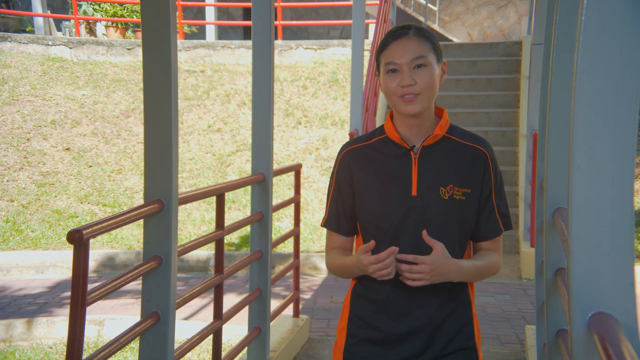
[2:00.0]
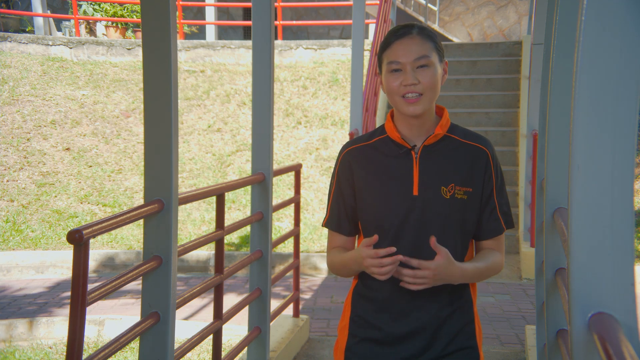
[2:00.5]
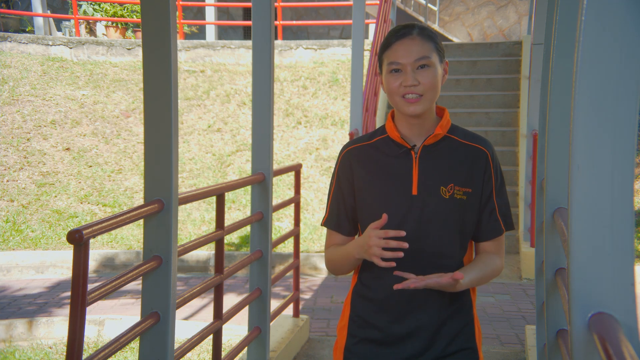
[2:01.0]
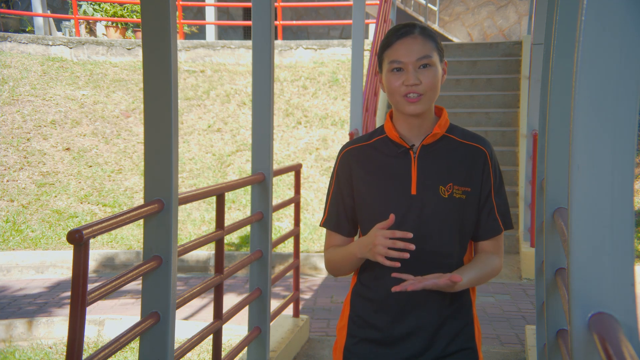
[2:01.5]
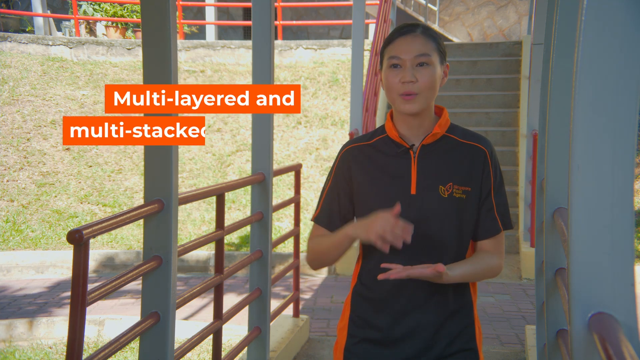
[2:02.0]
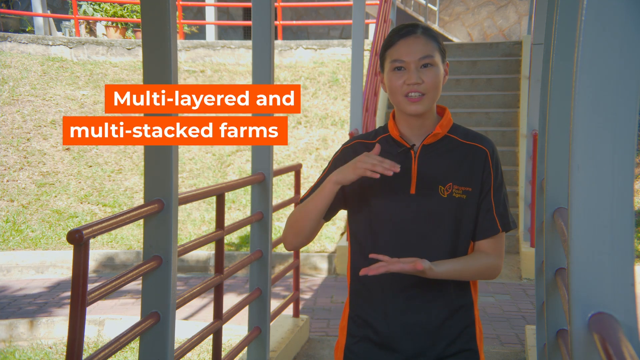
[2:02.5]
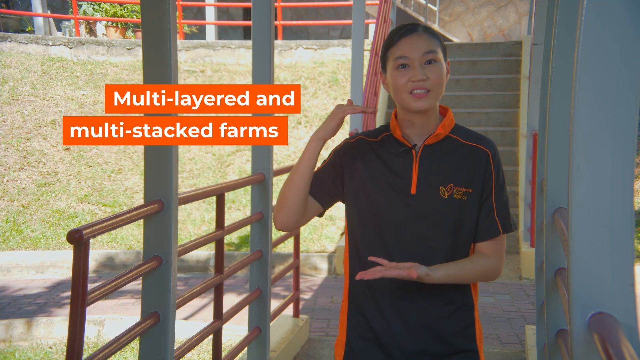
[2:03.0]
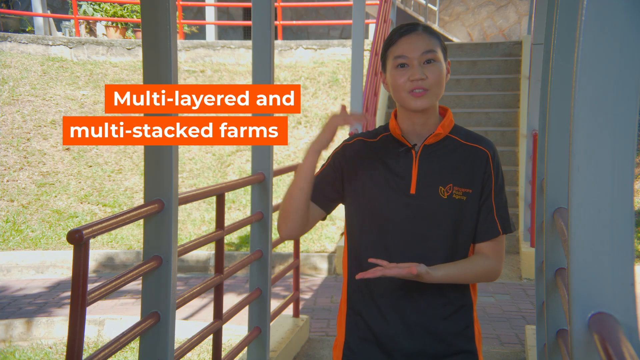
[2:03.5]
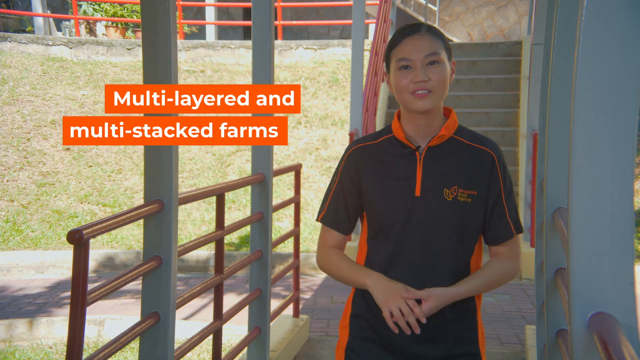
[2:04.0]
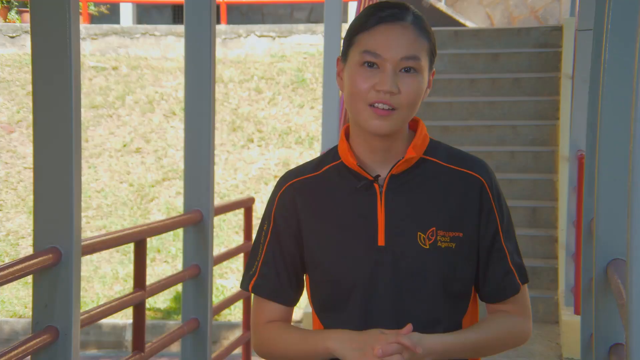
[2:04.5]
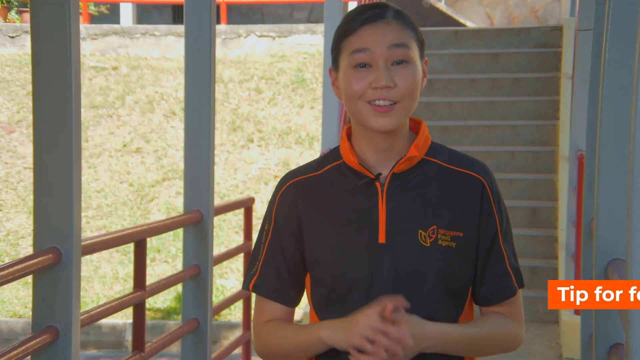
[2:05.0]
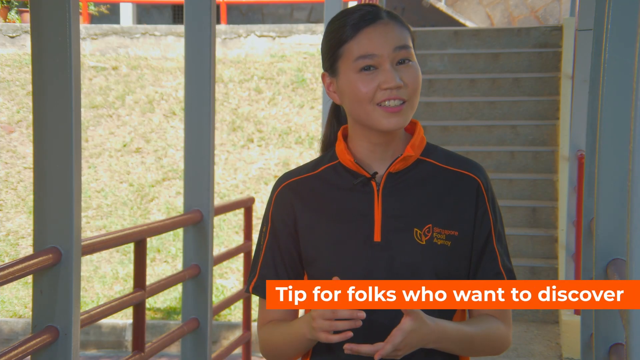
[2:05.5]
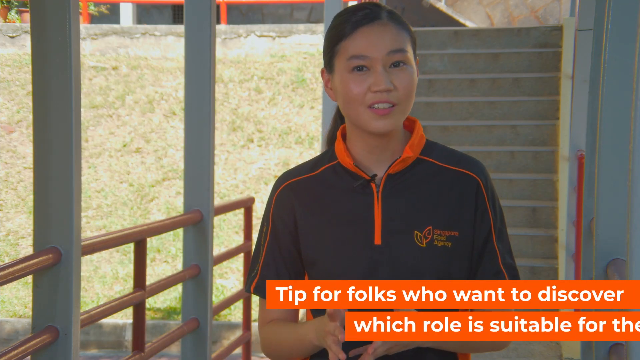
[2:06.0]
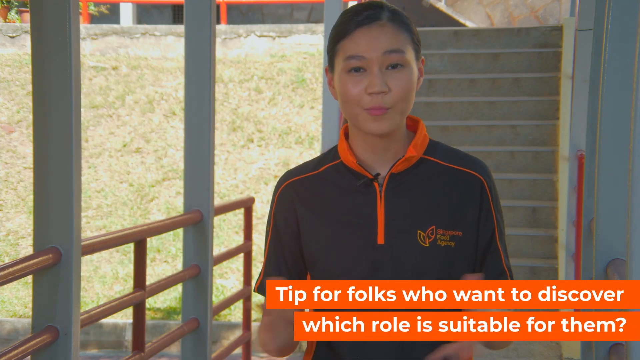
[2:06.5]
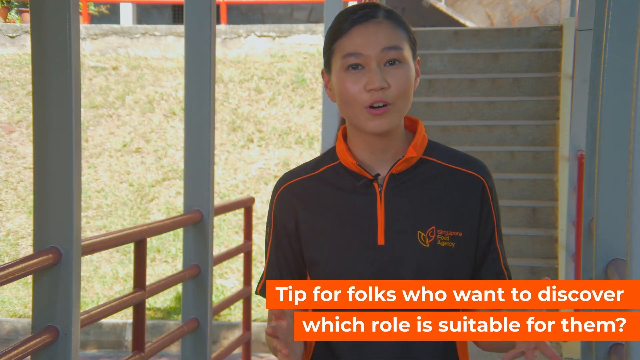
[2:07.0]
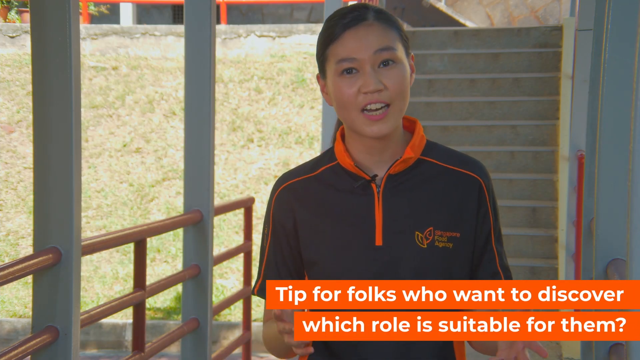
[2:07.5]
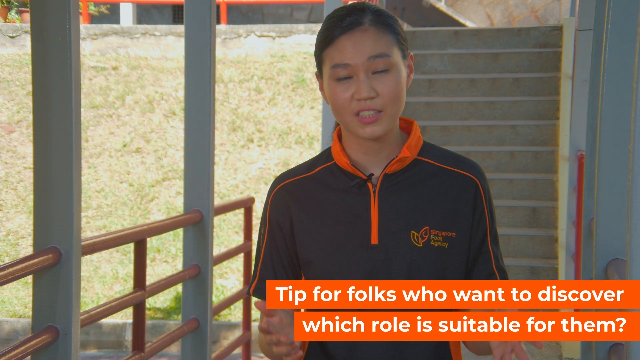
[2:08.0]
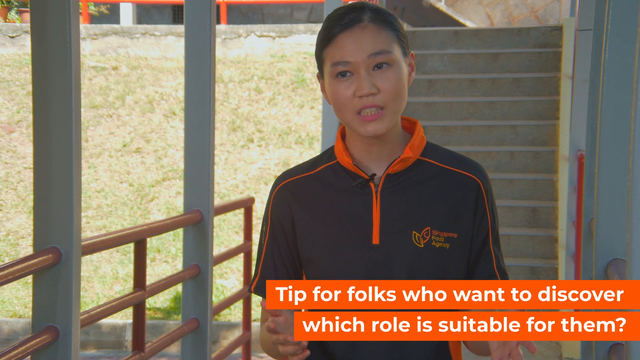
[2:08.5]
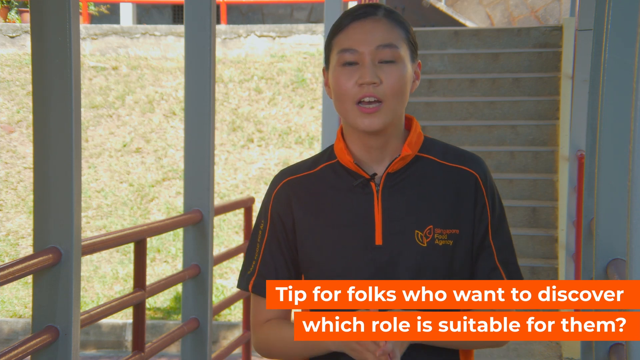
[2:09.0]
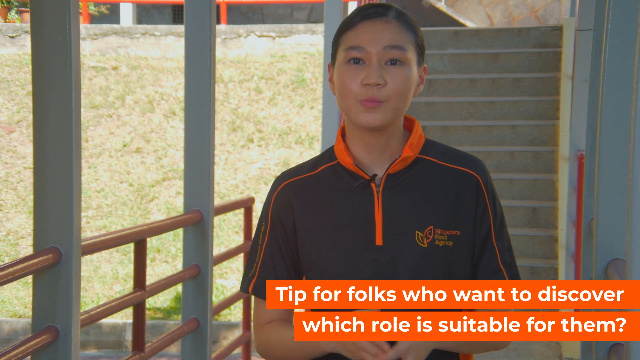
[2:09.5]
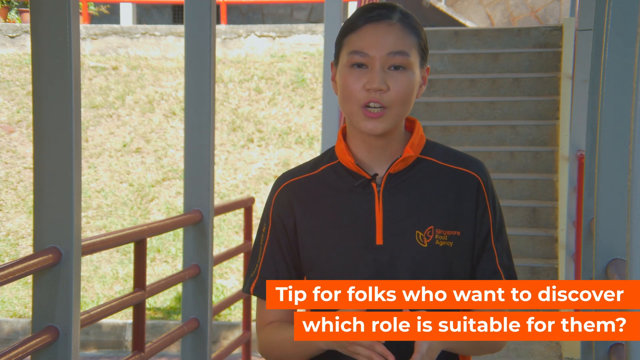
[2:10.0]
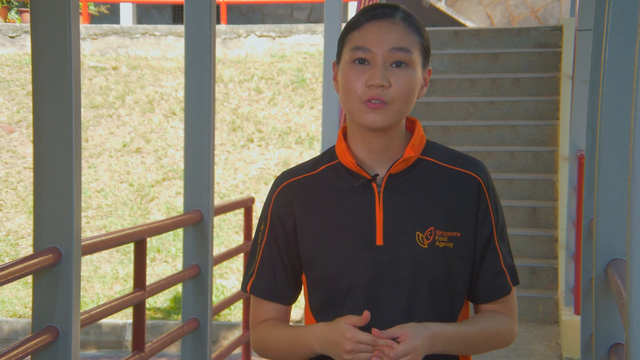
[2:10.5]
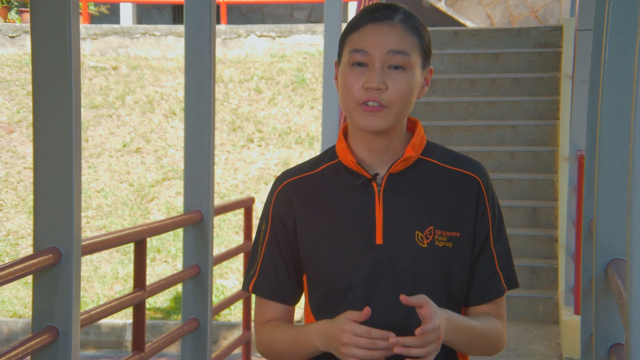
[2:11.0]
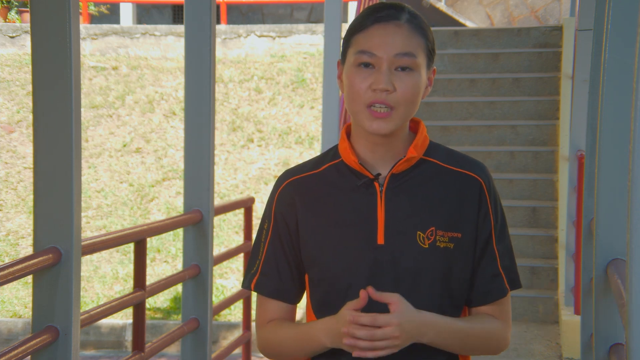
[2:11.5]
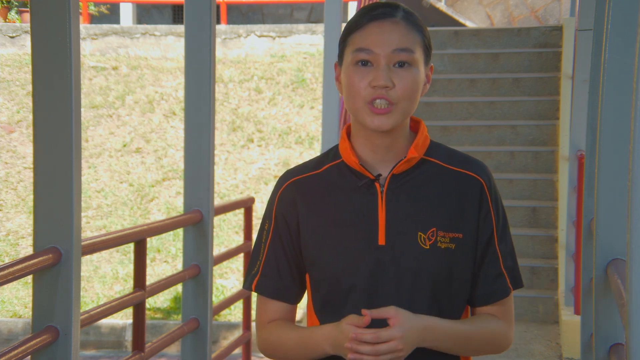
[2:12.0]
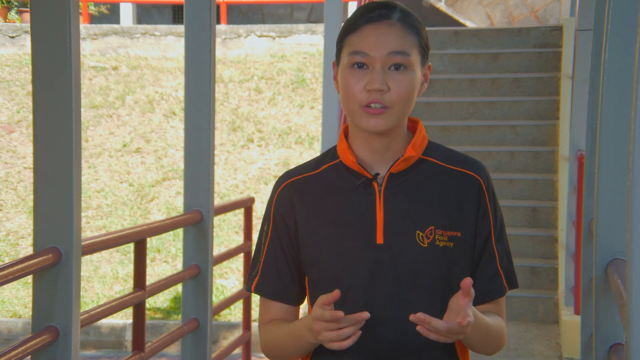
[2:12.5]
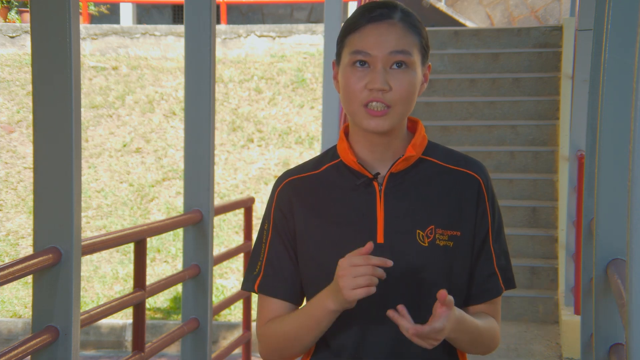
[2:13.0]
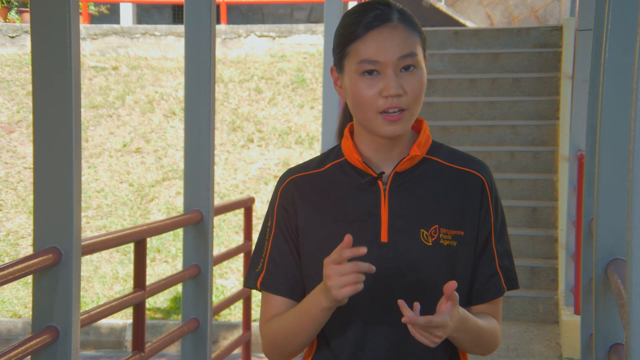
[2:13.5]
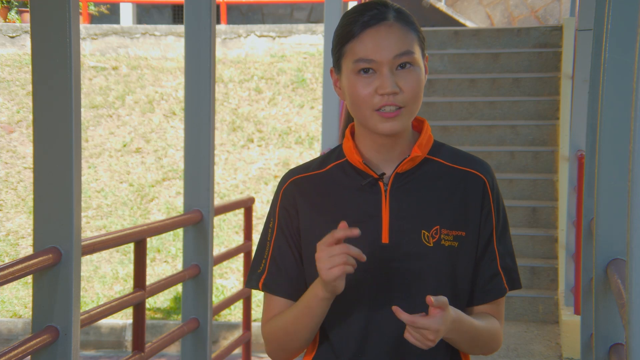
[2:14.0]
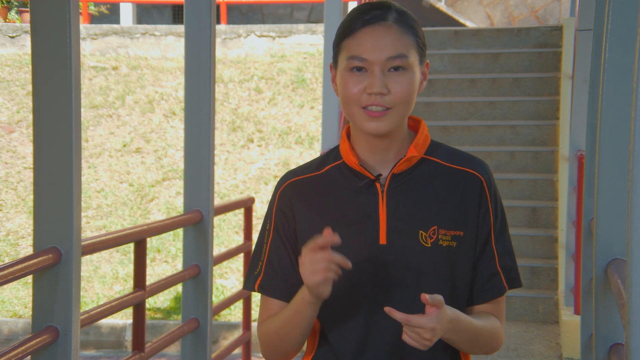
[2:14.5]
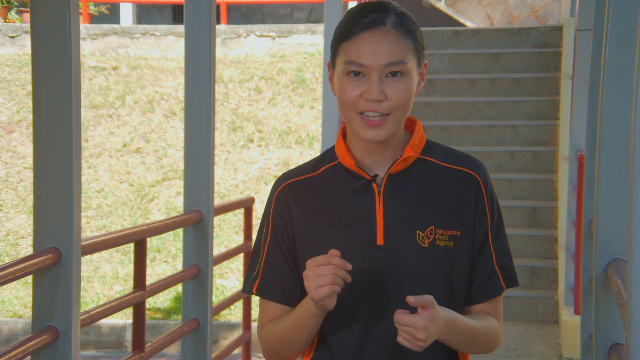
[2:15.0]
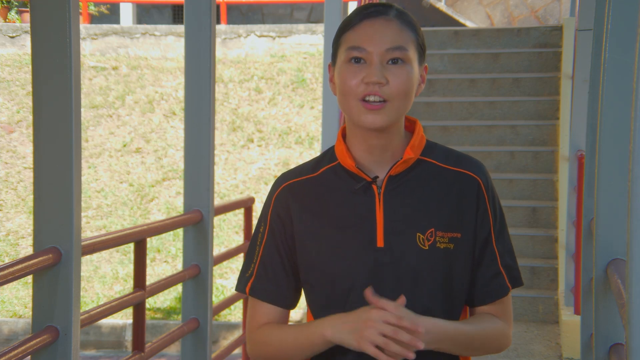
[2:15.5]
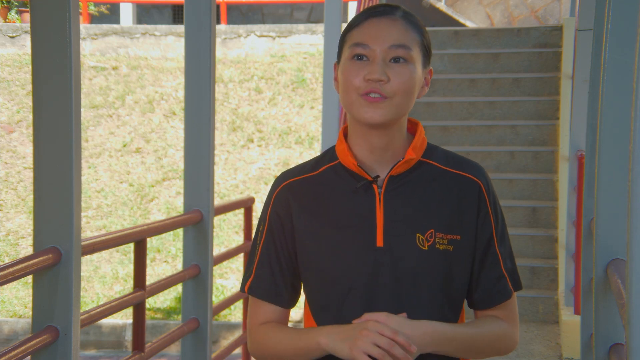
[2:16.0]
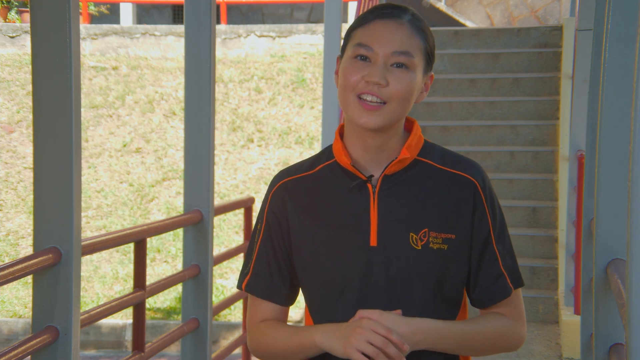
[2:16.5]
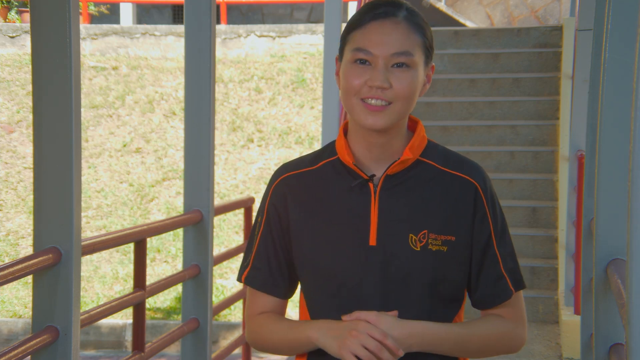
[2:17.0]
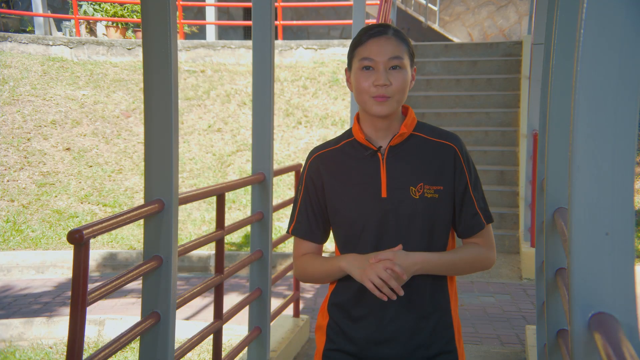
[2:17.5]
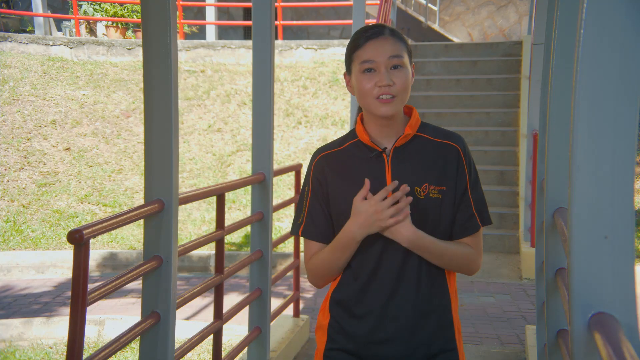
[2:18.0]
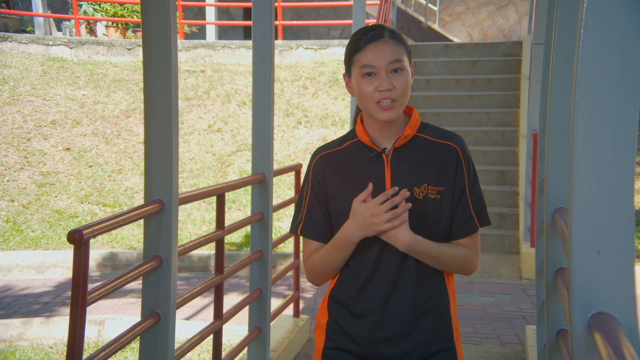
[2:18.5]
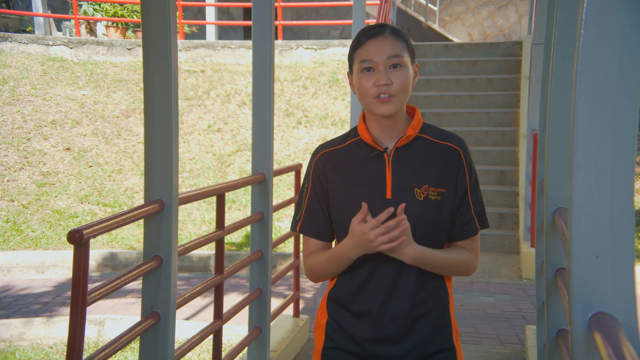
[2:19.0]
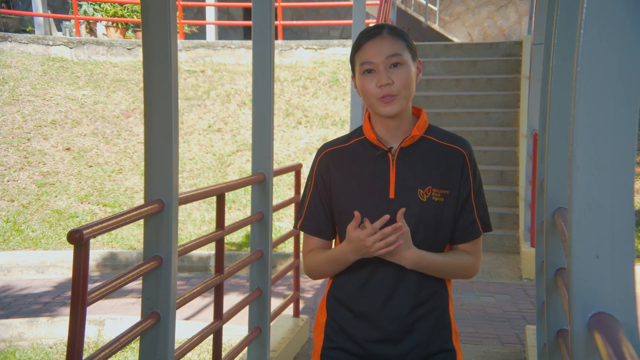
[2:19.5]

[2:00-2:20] The woman speaks to her audience, using her hands to indicate measurements and to emphasize her words. She appears to be standing outside the building in front of a flight of stairs, with a handrail to her left. She looks as if she is in deep thought as she speaks, and she smiles. She holds her hands crossed together up to her chest, seeming to speak about something close to her heart and of great concern to her. She wears short sleeves. The words "multi-layered and multi-stacked farms" appear in the middle section of the frame. Next, words beginning "tips for folks who want to discover" appear in the lower right corner as she continues speaking.